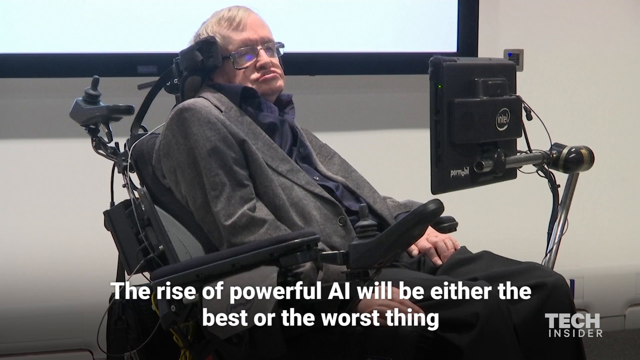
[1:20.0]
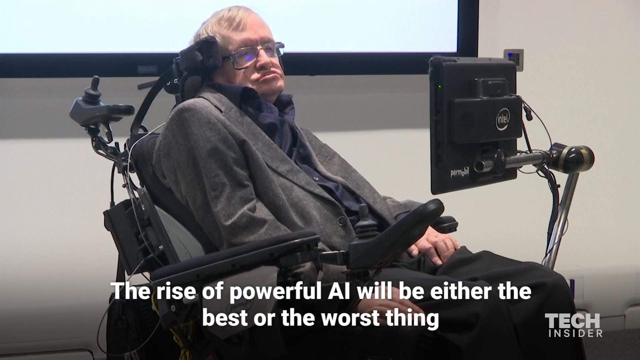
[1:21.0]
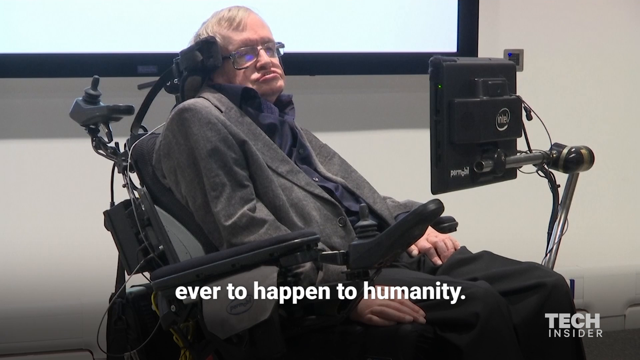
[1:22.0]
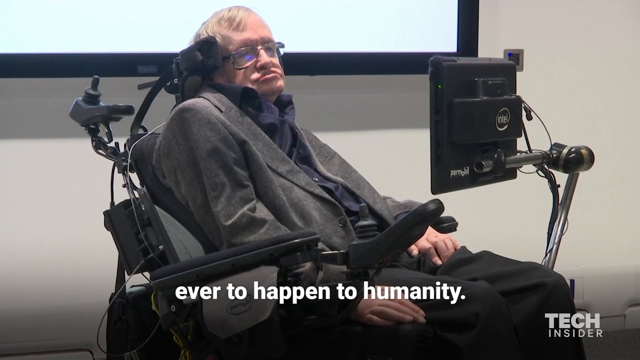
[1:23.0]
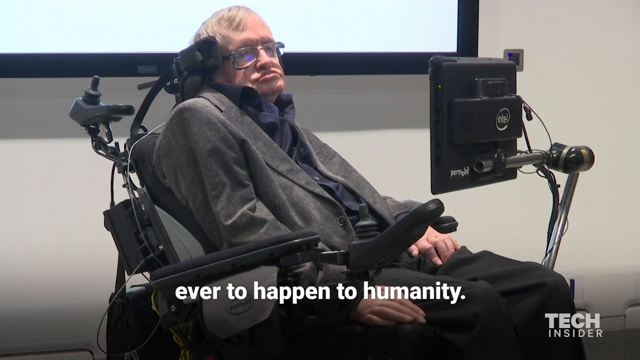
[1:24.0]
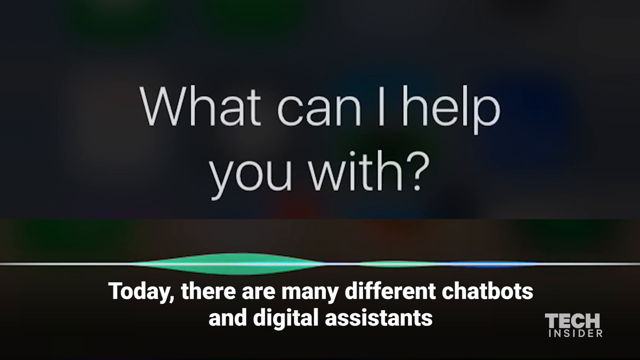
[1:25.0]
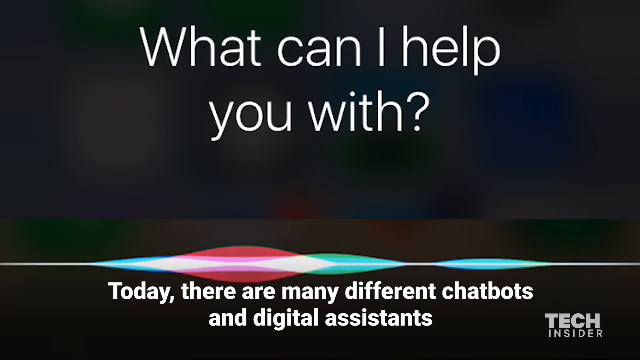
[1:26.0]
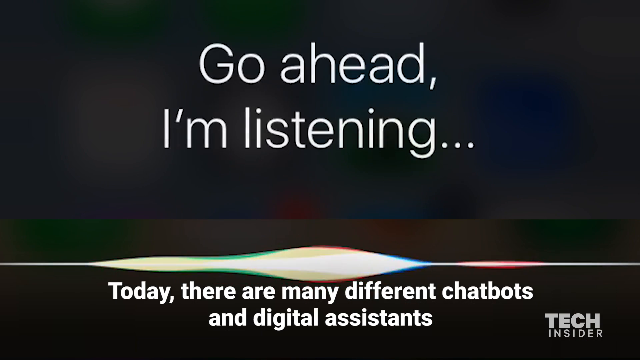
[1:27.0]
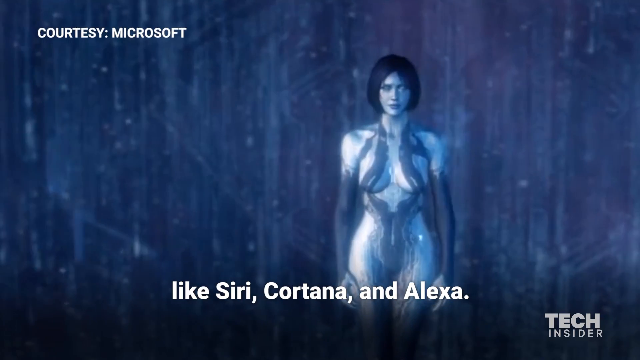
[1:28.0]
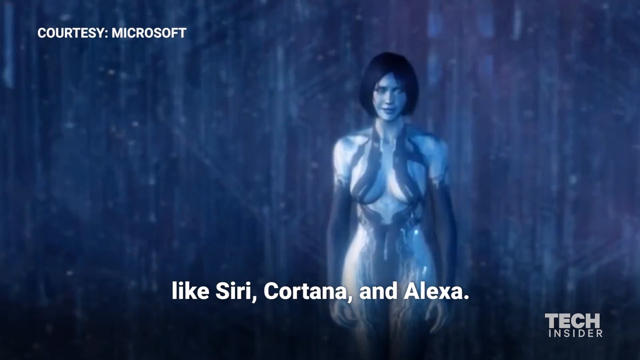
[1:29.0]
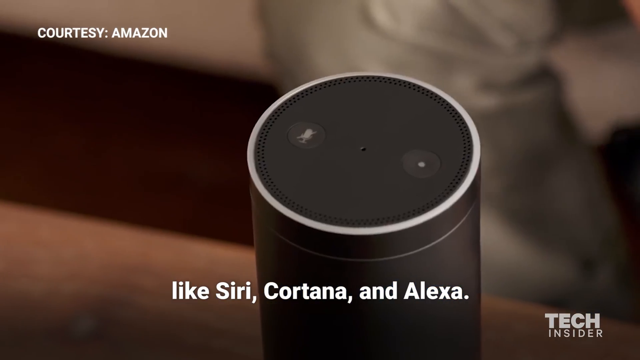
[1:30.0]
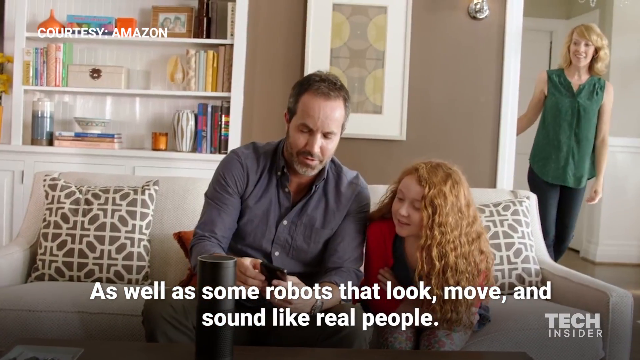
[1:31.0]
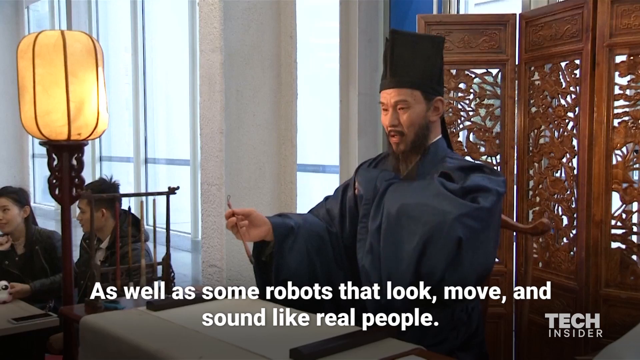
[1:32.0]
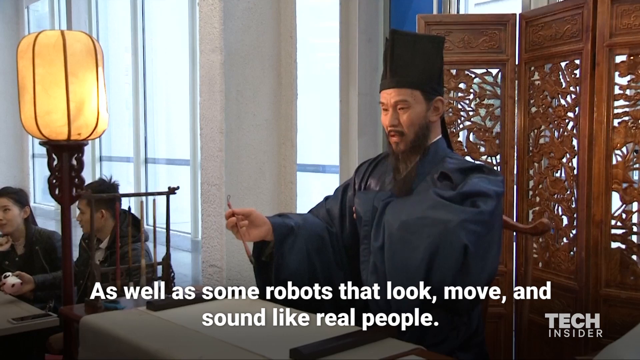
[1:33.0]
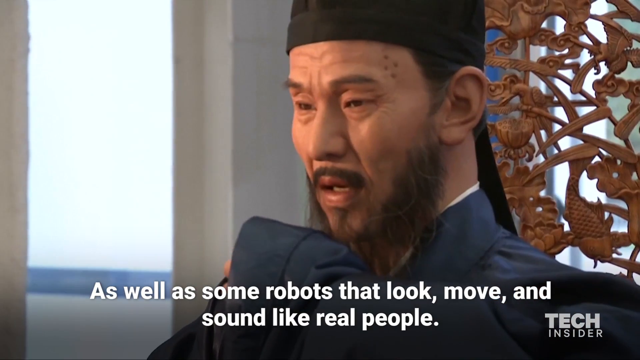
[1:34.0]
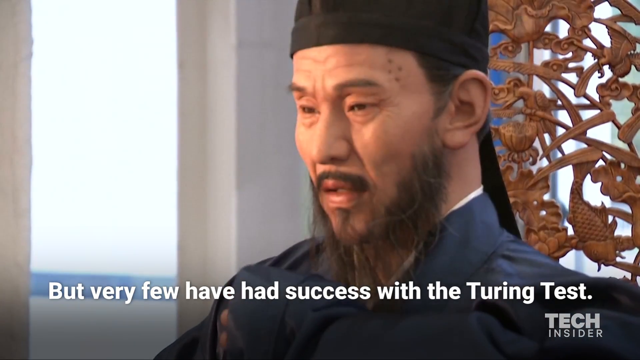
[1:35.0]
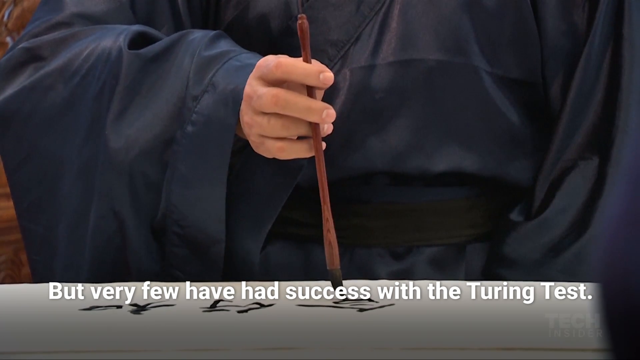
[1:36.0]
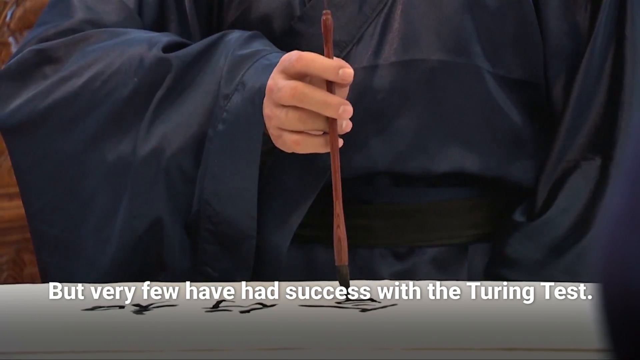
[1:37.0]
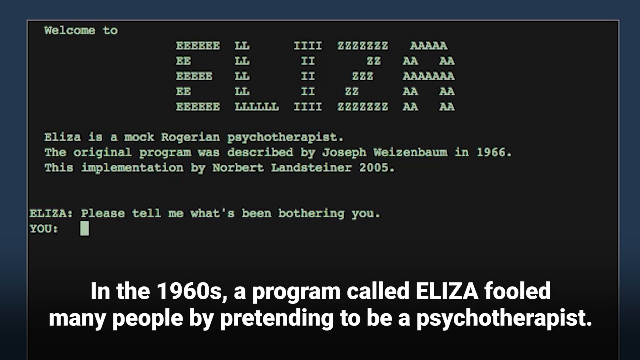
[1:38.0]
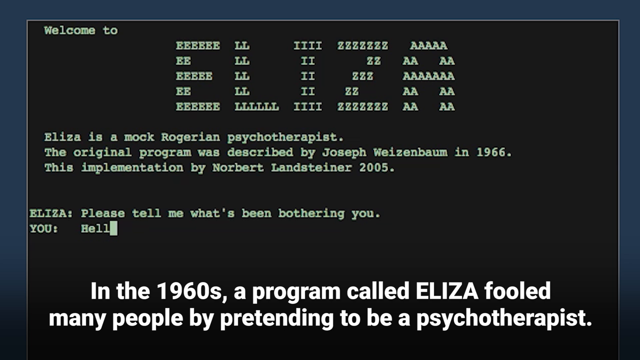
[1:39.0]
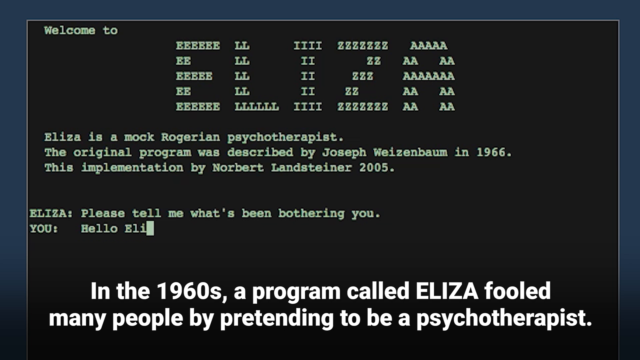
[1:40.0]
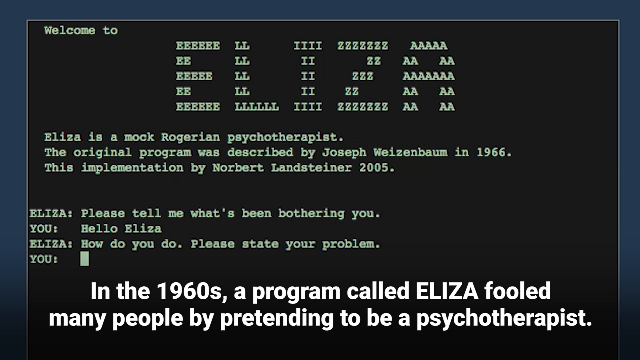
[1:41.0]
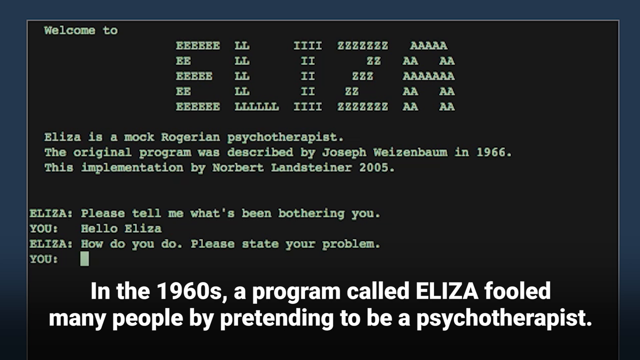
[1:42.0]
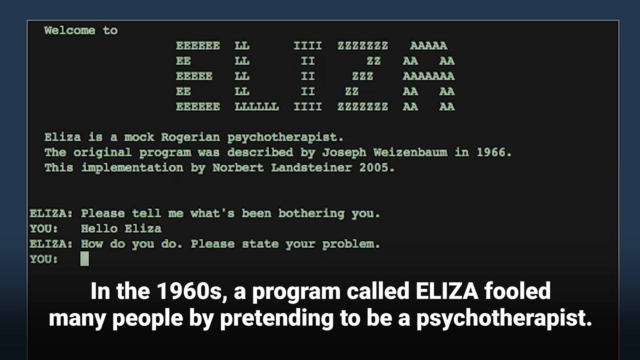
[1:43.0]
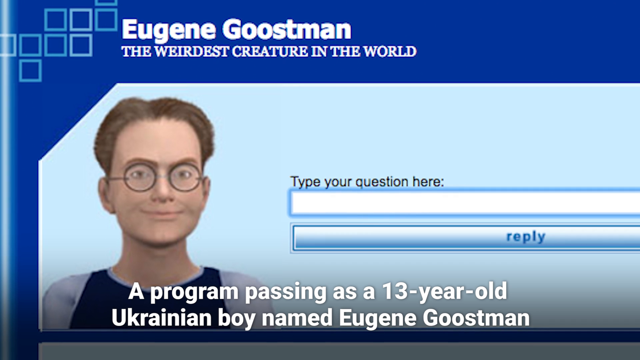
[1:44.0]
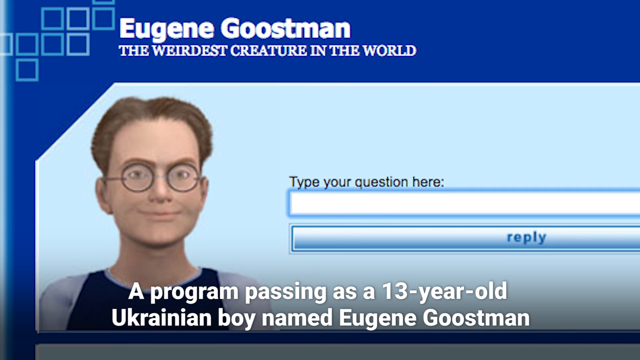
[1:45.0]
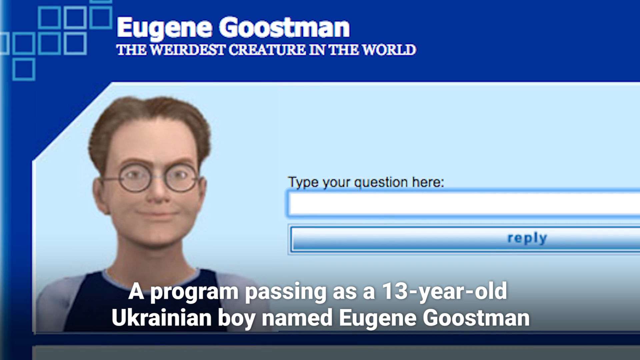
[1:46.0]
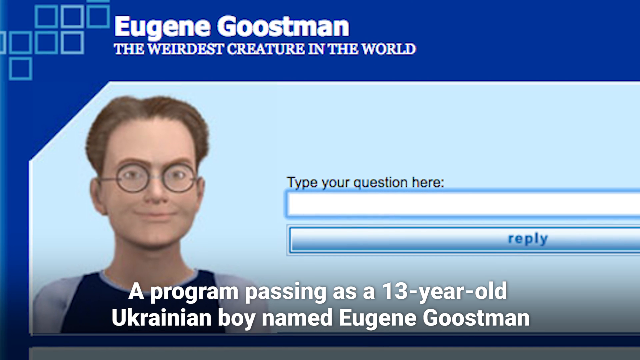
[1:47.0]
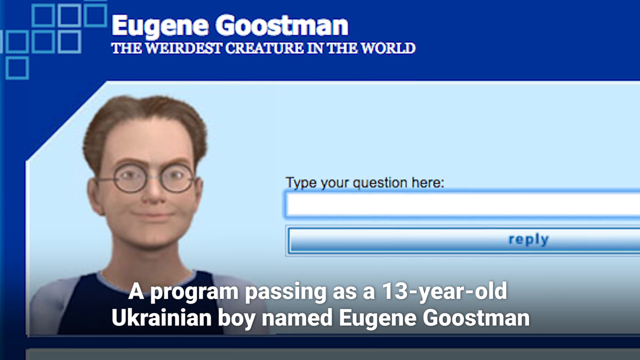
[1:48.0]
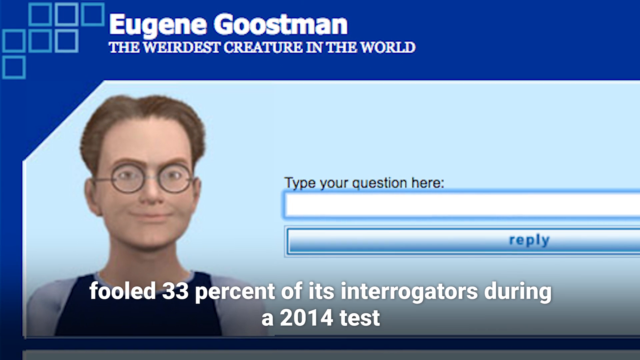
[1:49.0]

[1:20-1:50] The picture of Stephen Hawking suddenly gives way to a slide with a pulsating multicolored line at the bottom. The subtitle changes to "today there are many different chatbots and digital assistants." Sliding up from beneath the line, white text reads "what can I help you with", and the line pulsates as if talking. That disappears and the words "go ahead, I'm listening..." slide up. A clip of Cortana from Halo appears, walking toward the viewer in front of a technical circuitry pattern. The subtitle changes to "like Siri, Cortana, and Alexa", and the upper left-hand corner reads "courtesy Microsoft". A black cylinder is shown, apparently an Alexa product, including its top. A family scene follows: a middle-aged father in a gray button-up shirt and his red-haired daughter, sitting to his right, both sit on a white couch with a couple of geometric-patterned throw pillows on either side. Behind him is a white shelf with various books and vases and a white frame with a geometric pattern, against a taupe wall. To the right is the mother, a blonde woman in a green tunic and black leggings. The father looks at his phone, and the daughter turns back to look at the mother. The upper left-hand corner reads "courtesy Amazon". It switches to a lifelike Chinese cyborg with a tall black hat, with an oriental lamp on the left and some kind of carved wooden shoji on the right. The subtitle says "as well as some robots that look, move, and sound like real people." The cyborg slowly moves its hand downward in an unnatural robotic movement, the view zooms in on its face showing it talking, and the subtitle says "but very few have had success with the Turing test." Its hand is shown drawing with an ink brush. Next is a photo of an old-style monitor reading "welcome to Eliza", where each letter of the word Eliza is made up of that letter. Below that it reads "Eliza is a mock Rogerian psychotherapist. The original program was described by Joseph Weissenbaum in 1966, this implementation by Norbert Landsteiner, 2005." Under that it reads "Eliza, please tell me what's been bothering you", and beneath that "you" followed by a blinking text entry box. The subtitle says "in the 1960s, a program called Eliza fooled many people by pretending to be a psychotherapist." "Hello, Eliza" is typed in, and Eliza replies "how do you do, please state your problem". It flips to a dark blue screen with geometric patterns in the upper left corner, headed "Eugene Goostman, the weirdest creature in the world". Below is a 3D rendering of a man with brown hair, round glasses and a blue and white shirt, and to his right is a text box labeled "type your question here" with a reply button under it. The subtitle says "a program passing as a 13-year-old Ukrainian boy named Eugene Goostman" as the view zooms in slowly, then "has fooled 33% of its interrogators during a 2014 test."